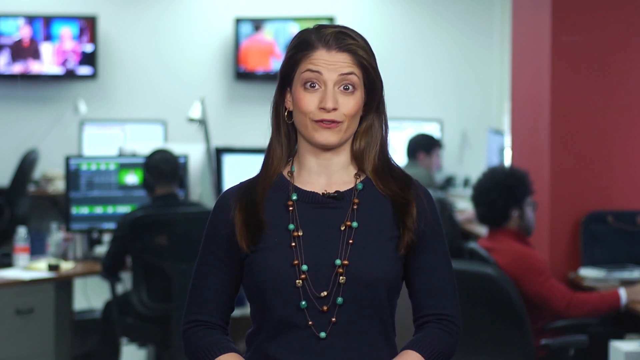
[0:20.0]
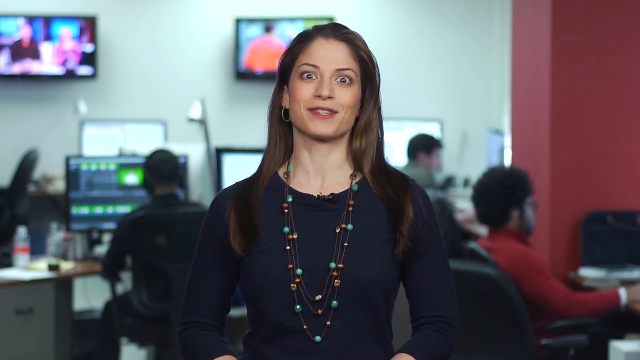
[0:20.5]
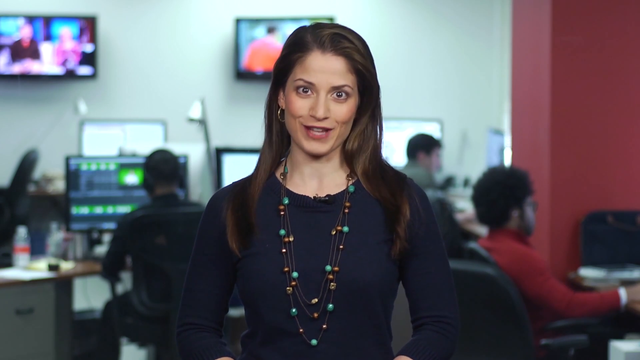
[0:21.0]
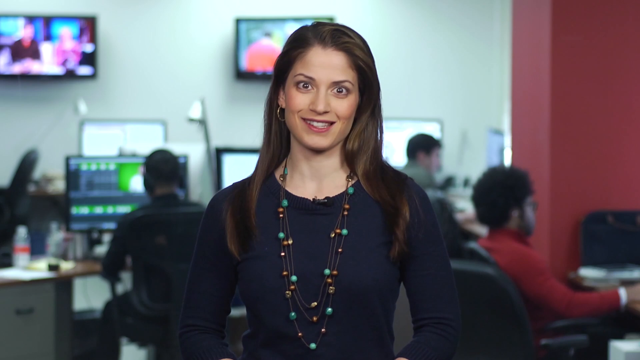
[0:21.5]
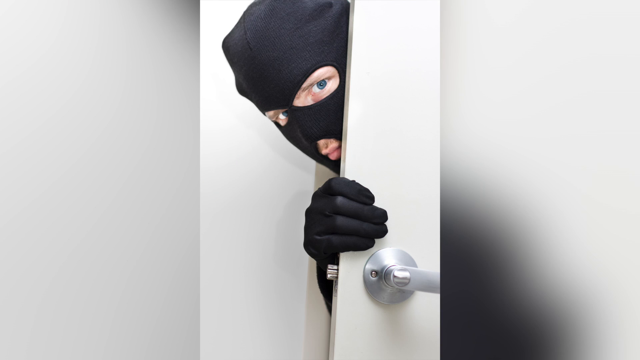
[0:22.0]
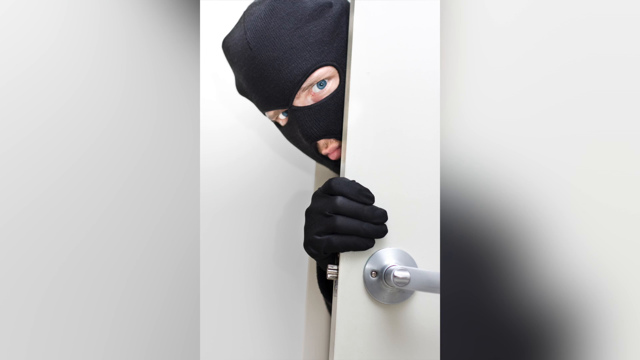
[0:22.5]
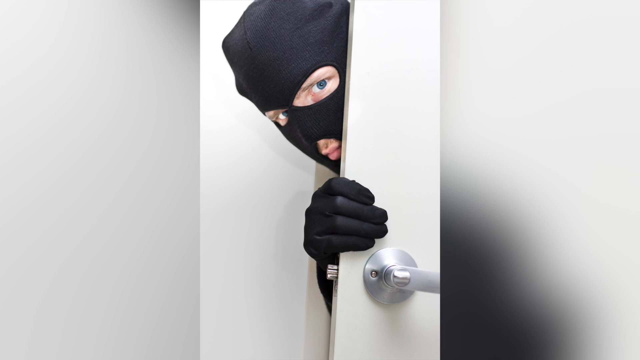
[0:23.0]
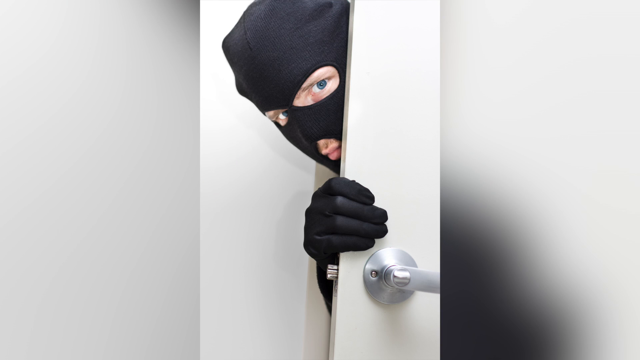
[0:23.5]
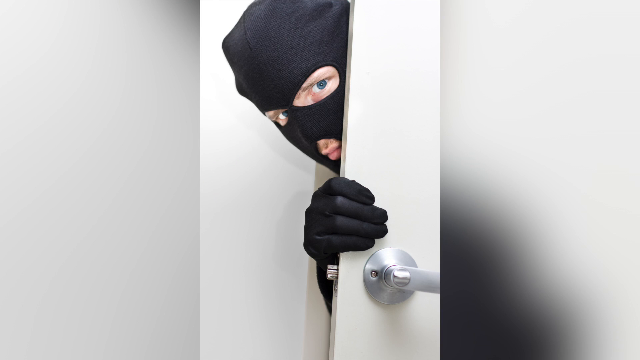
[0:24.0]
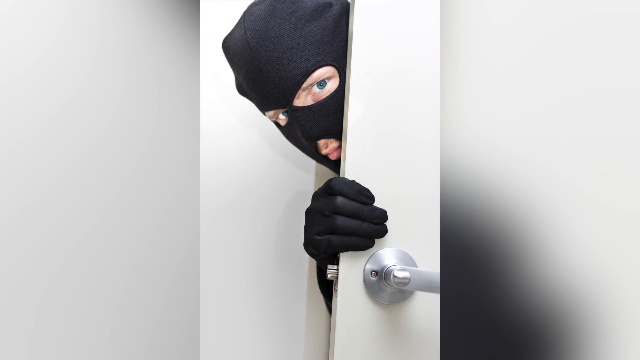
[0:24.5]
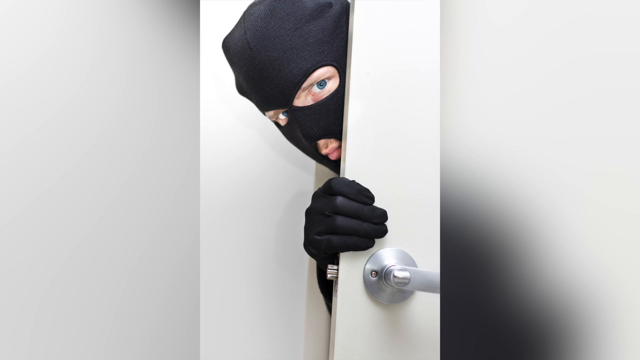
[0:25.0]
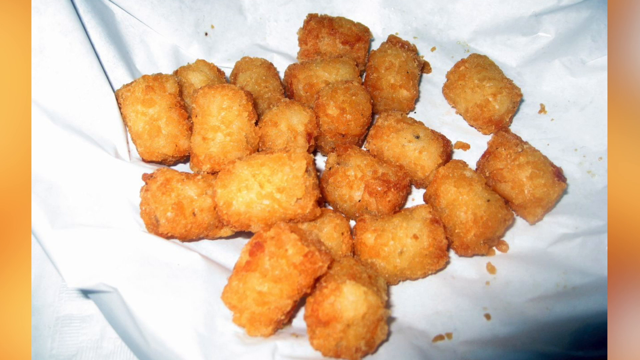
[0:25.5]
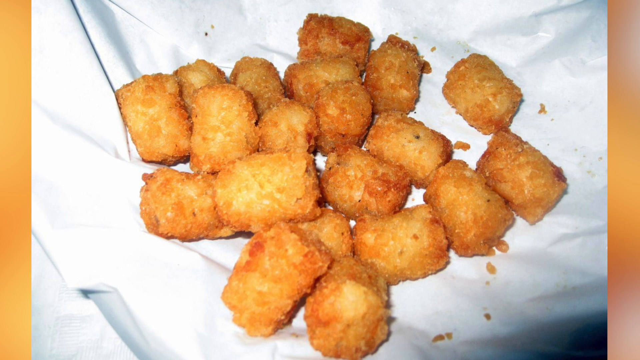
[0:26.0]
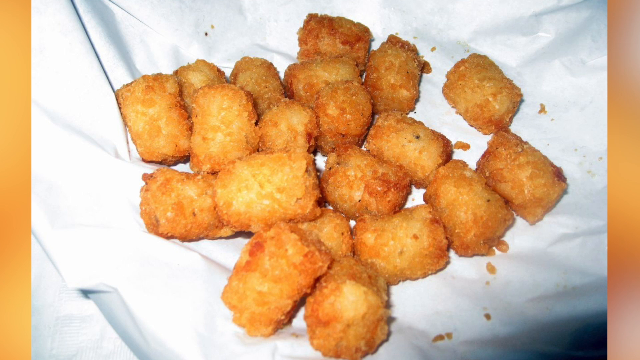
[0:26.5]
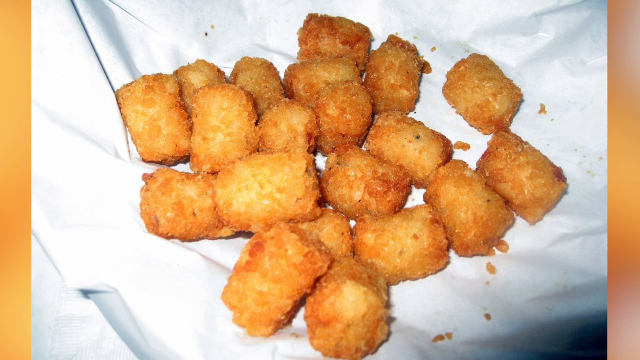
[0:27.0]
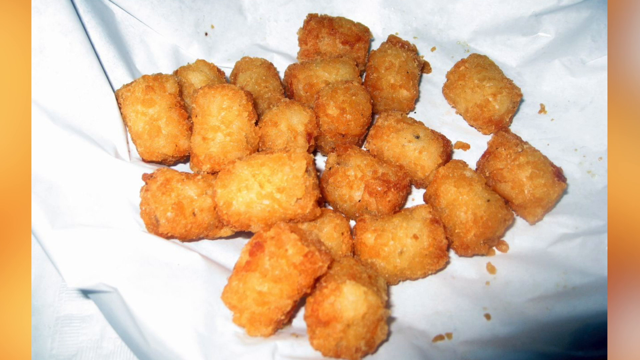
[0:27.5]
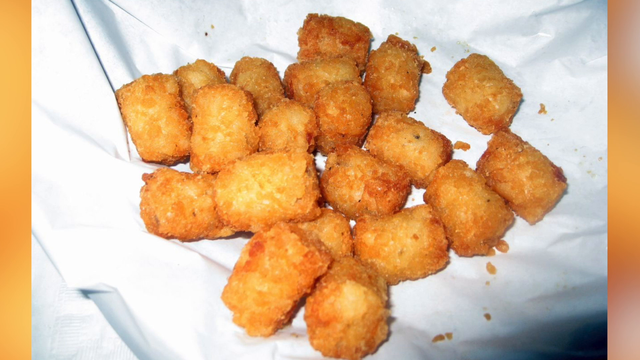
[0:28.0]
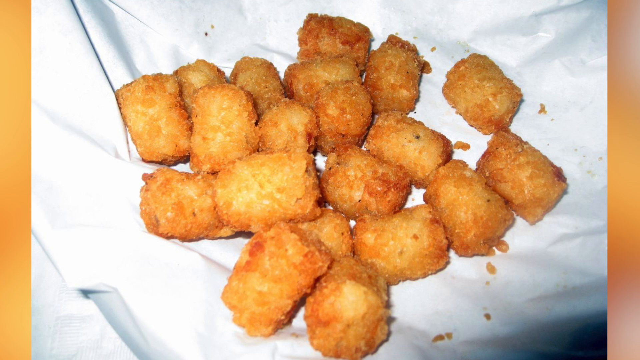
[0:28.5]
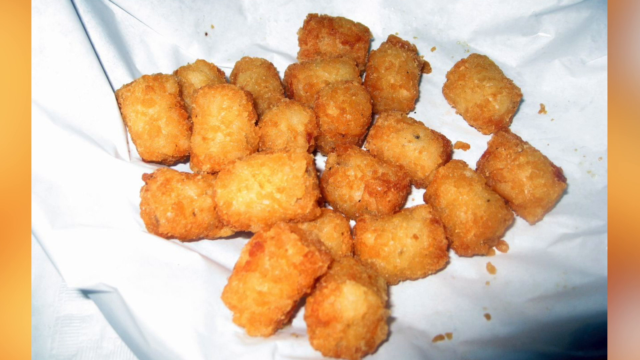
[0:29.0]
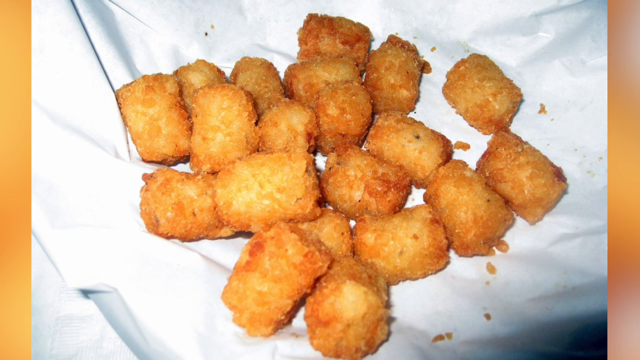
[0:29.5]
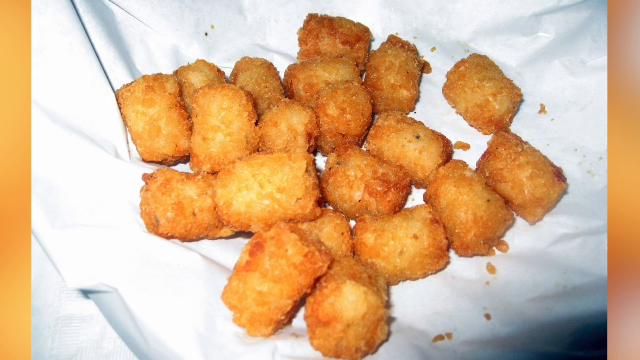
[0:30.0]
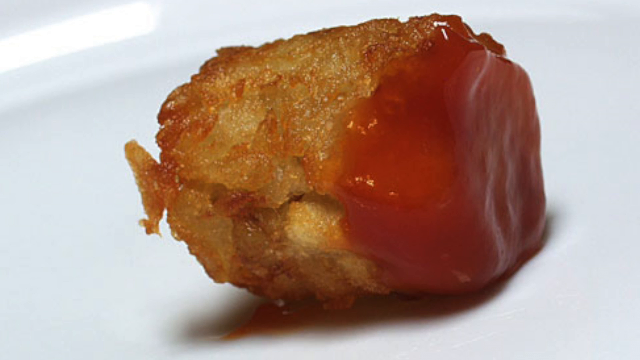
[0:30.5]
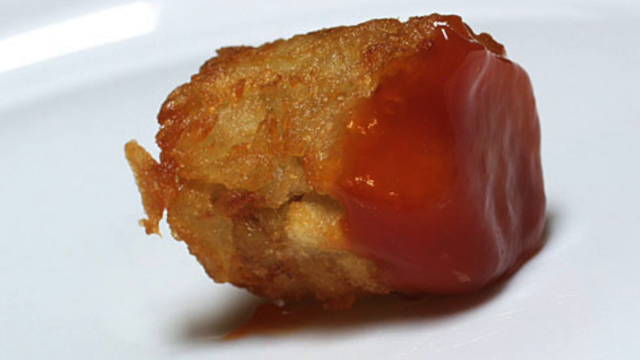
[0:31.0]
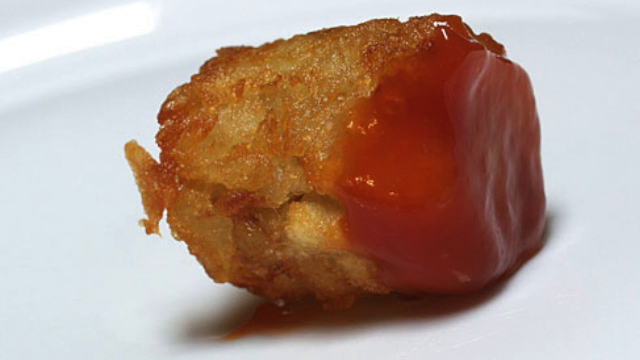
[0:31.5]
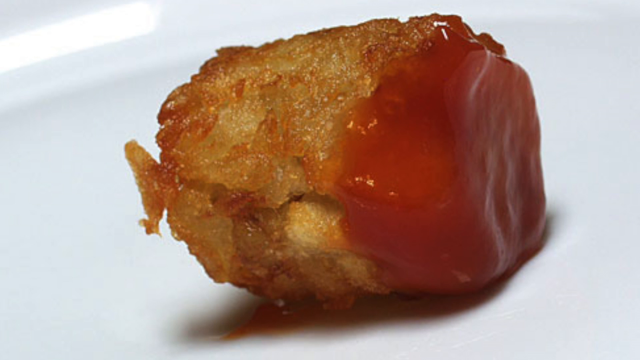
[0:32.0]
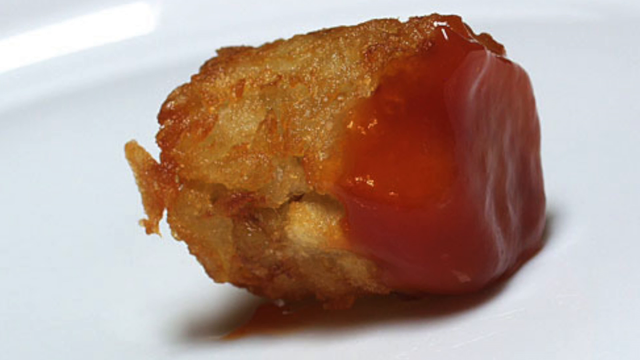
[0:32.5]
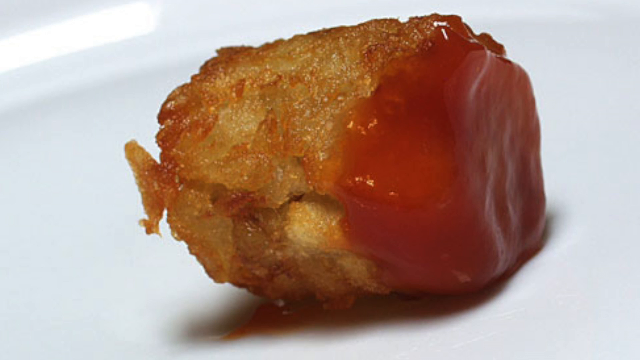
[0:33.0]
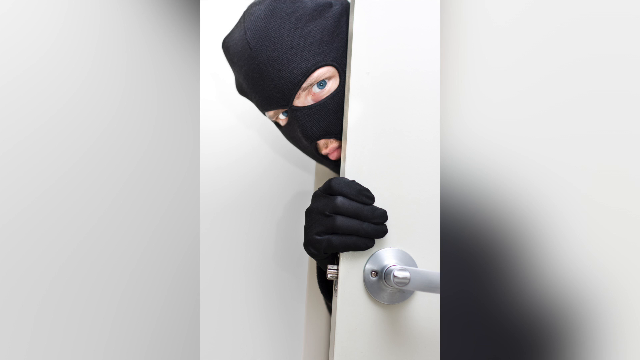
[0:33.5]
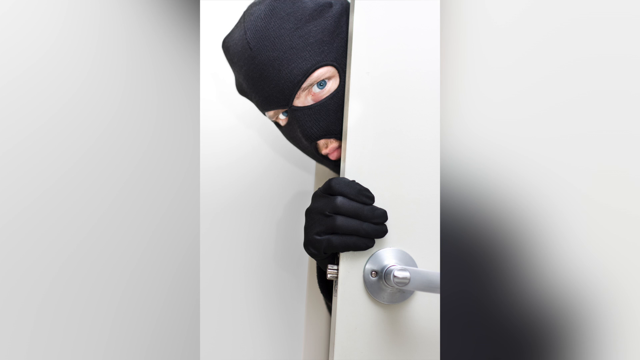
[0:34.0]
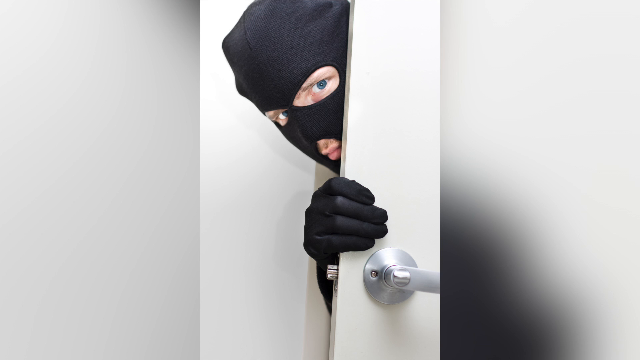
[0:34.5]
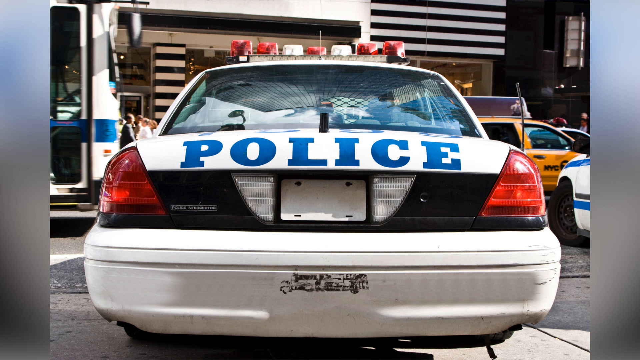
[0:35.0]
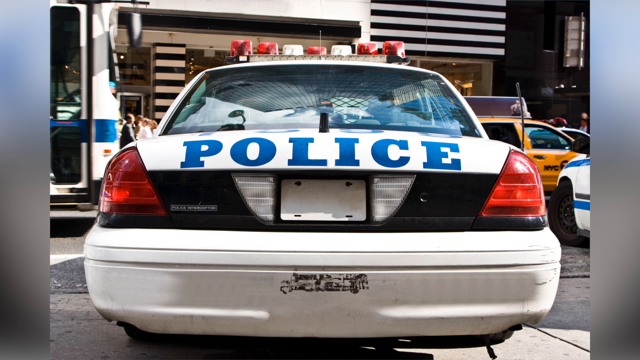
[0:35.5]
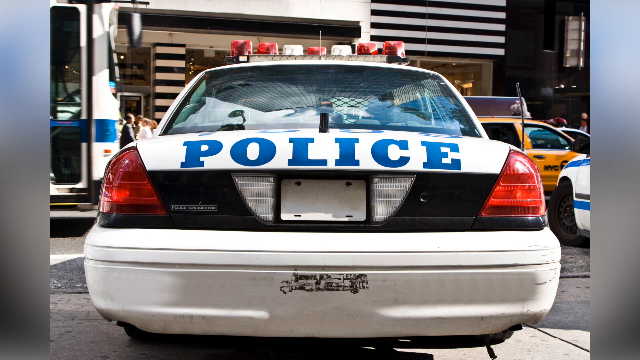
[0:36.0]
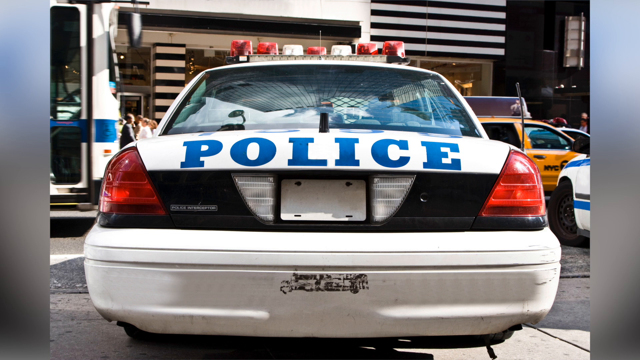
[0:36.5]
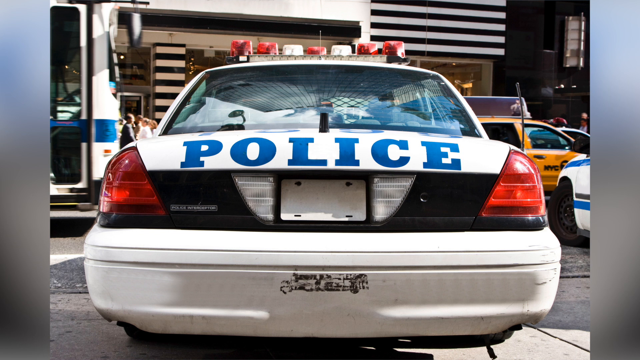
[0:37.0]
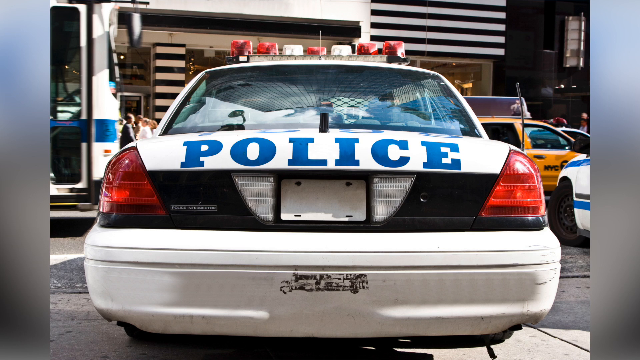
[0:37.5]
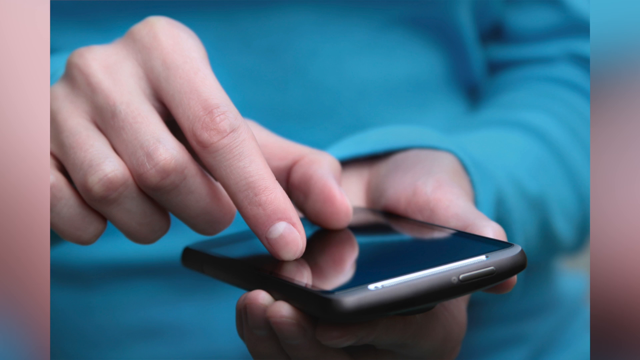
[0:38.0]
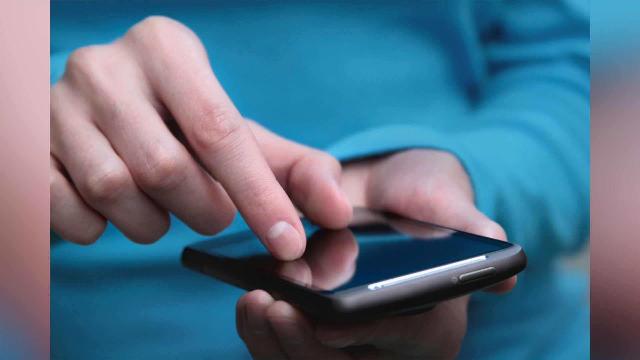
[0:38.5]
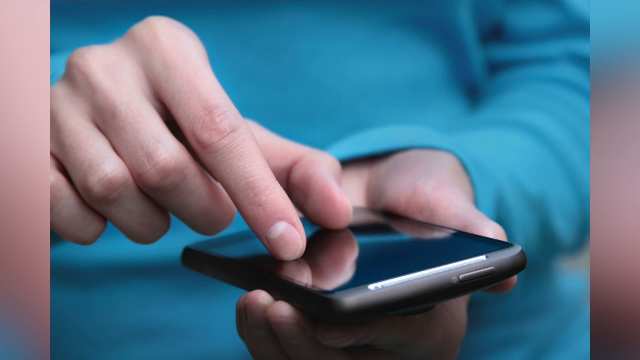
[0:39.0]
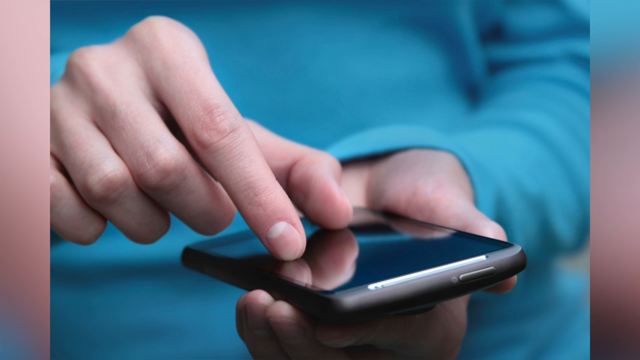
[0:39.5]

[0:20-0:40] The woman continues reporting, with the focus on her facial expression; she looks very adamant as she discusses the event. Then there is a picture of a man with a mask on his face, showing only an opening for the mouth and openings for the two eyes, and gloves on his hands. He looks like he is peeping through a door, and the camera focuses on him. Next there is a picture of doughnuts on a piece of paper, followed by a picture in which the doughnuts have reduced to one. The back of a police vehicle is shown, and then a hand dialing a number on a phone. A series of pictures follows.